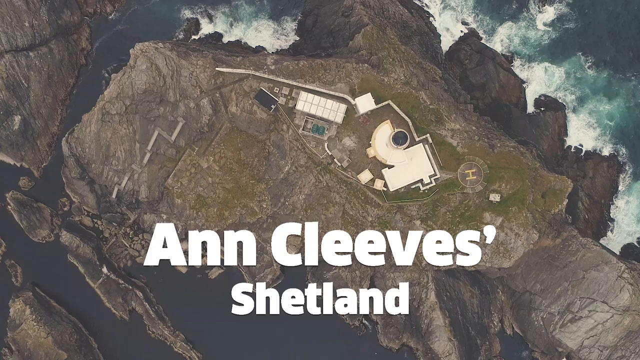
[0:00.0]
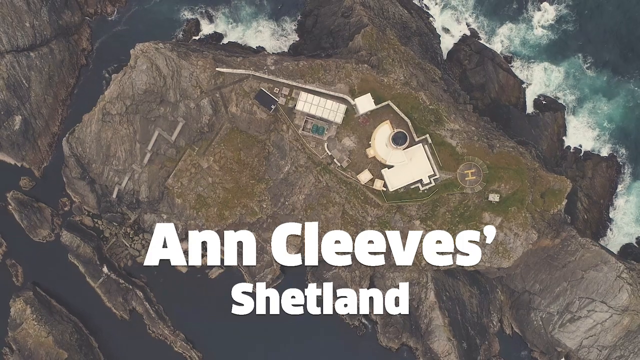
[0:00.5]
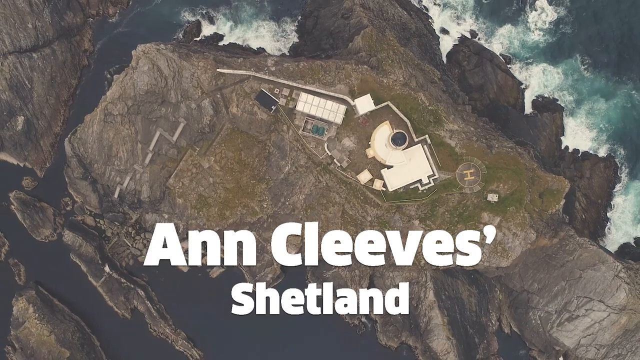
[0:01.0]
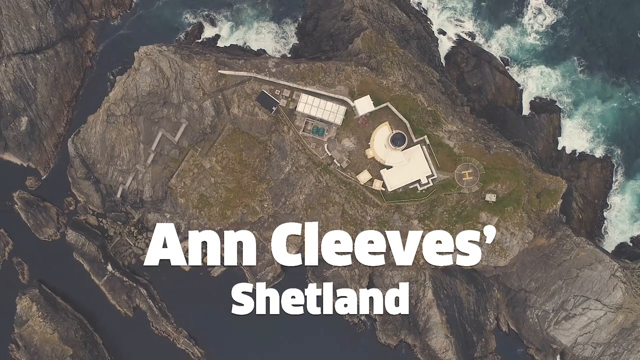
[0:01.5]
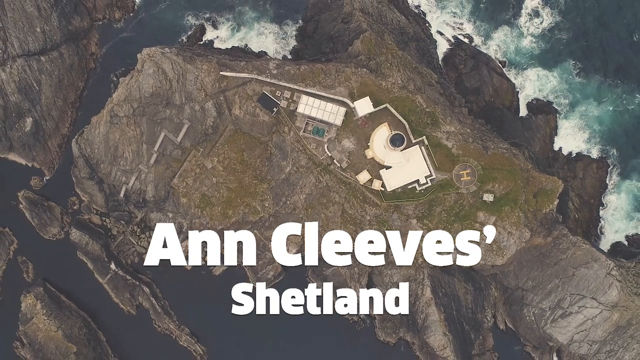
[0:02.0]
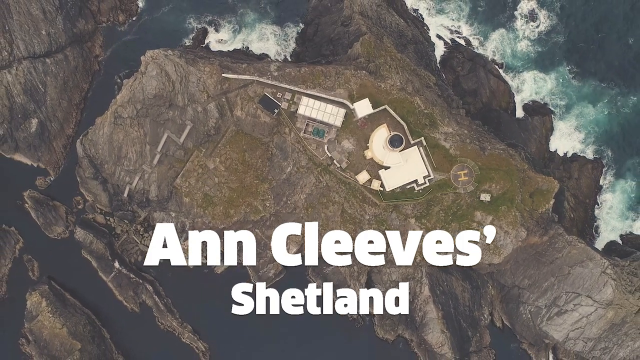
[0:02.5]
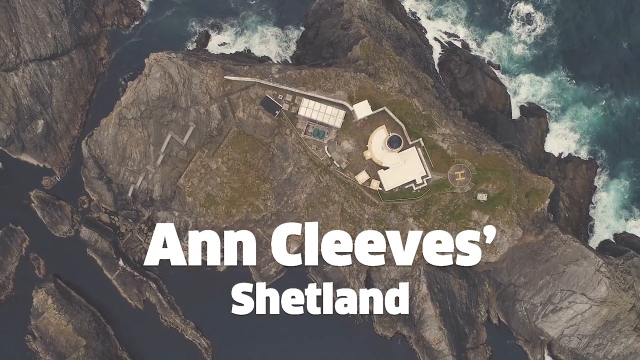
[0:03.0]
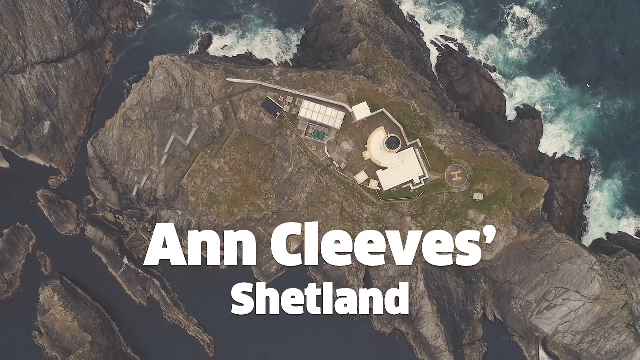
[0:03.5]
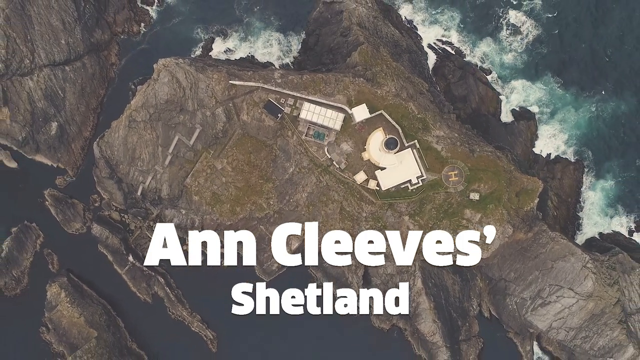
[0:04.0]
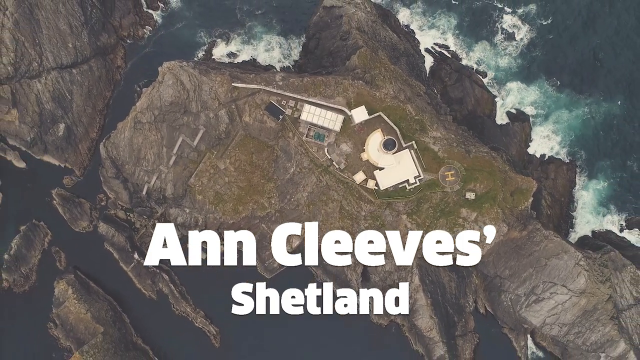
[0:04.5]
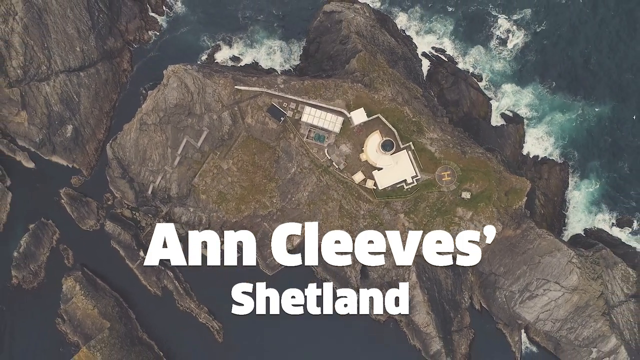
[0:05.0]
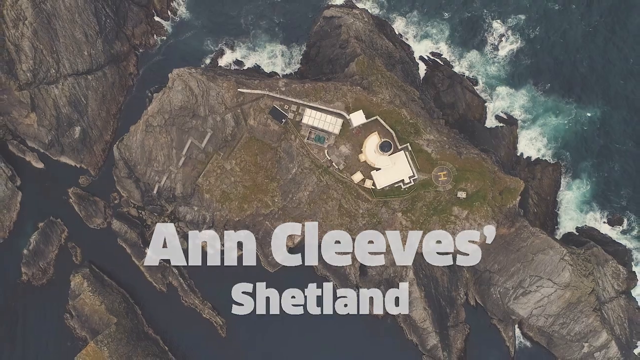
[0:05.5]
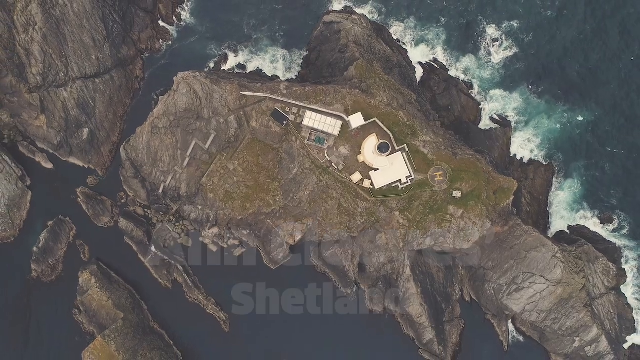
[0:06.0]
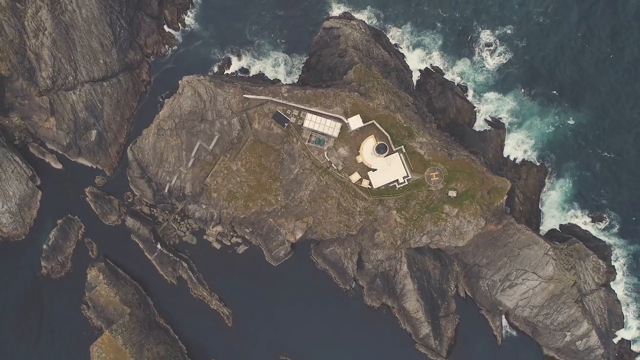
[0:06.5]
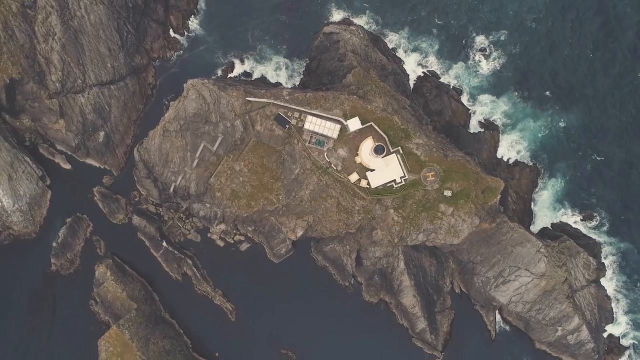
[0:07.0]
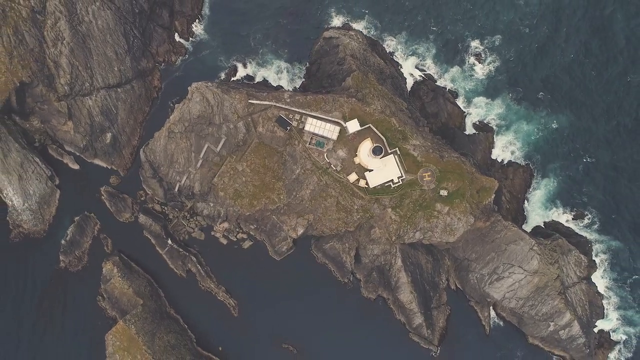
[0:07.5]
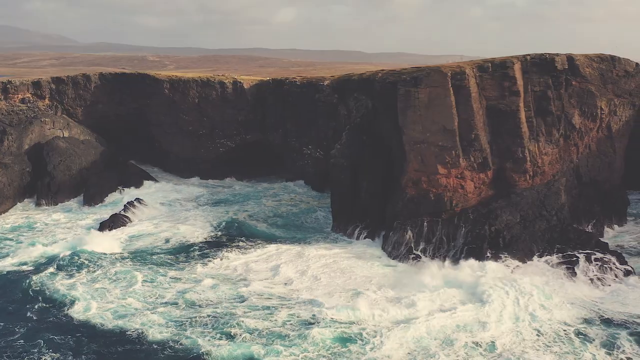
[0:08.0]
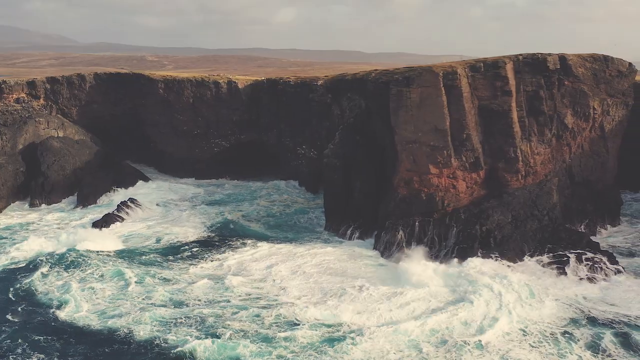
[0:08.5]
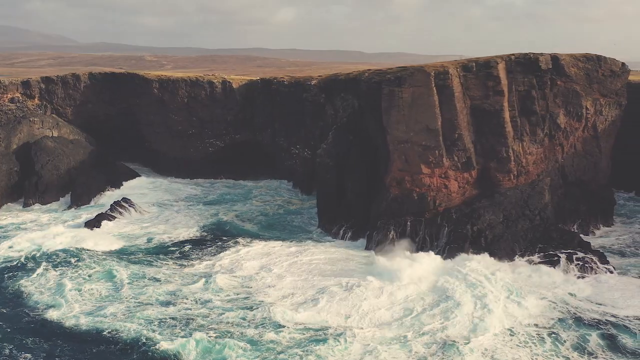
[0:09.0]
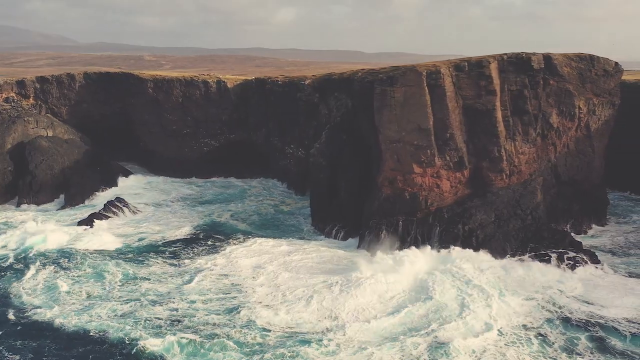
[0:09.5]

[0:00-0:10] The video begins with a bird's-eye view of the Shetland Islands seen from above: waves and sea surround a bit of land with some sort of complex or facility on it. White text on the screen reads "Anne Cleaves Shetland". The camera pans out and the text fades, switching to a horizontal view of a cliff side with waves bashing against it. It looks like a very foggy day, with the sun peeking out and casting an orange ambient glow across the mountainsides. The hills in the background are grey and more desaturated because of how far away they are.